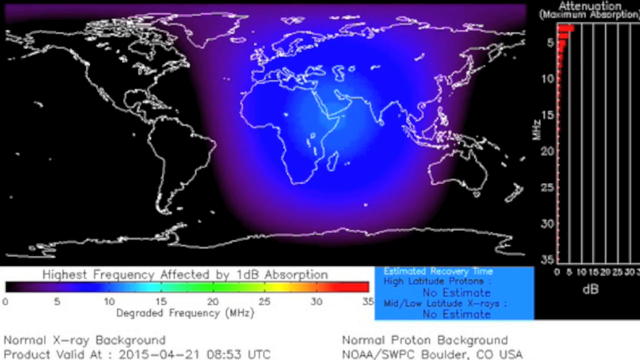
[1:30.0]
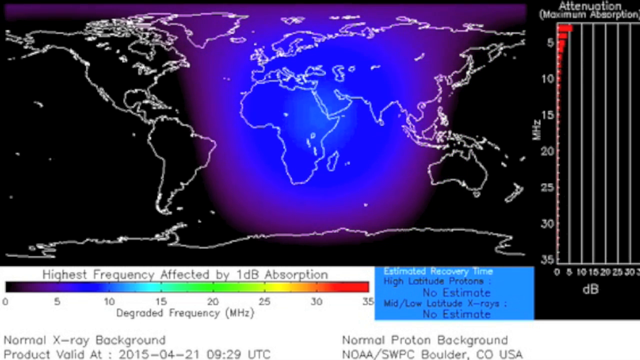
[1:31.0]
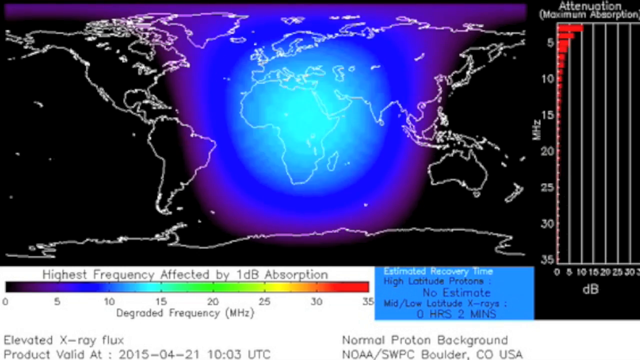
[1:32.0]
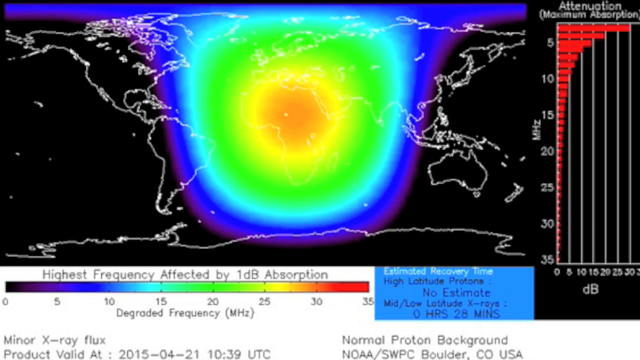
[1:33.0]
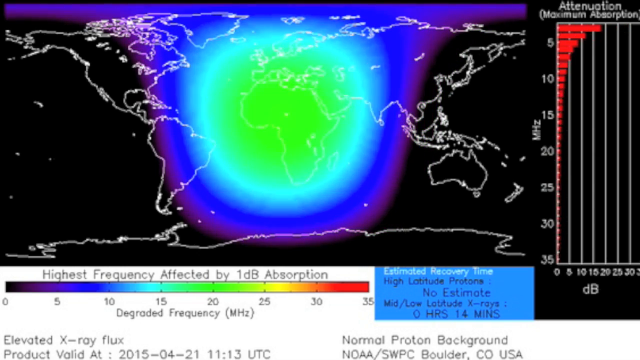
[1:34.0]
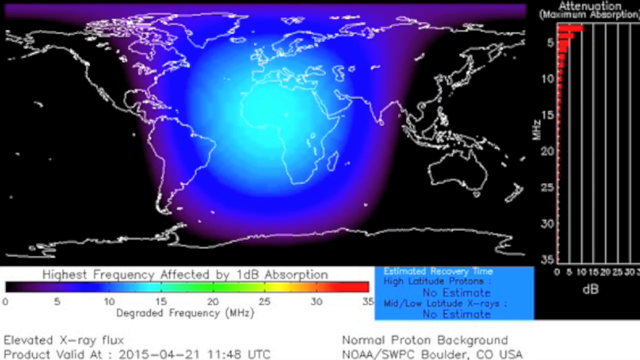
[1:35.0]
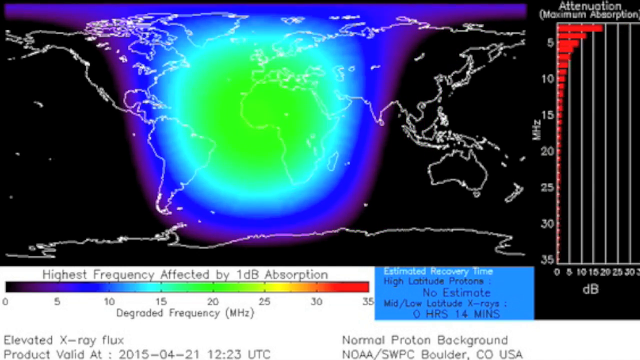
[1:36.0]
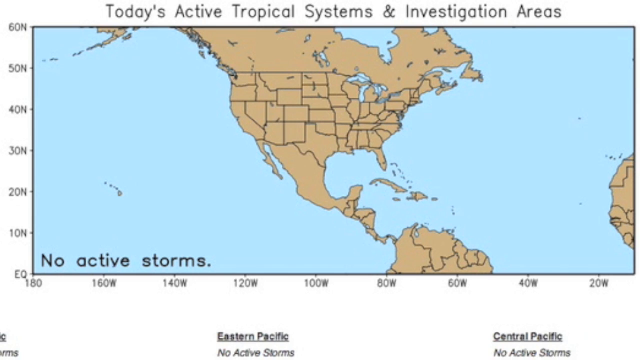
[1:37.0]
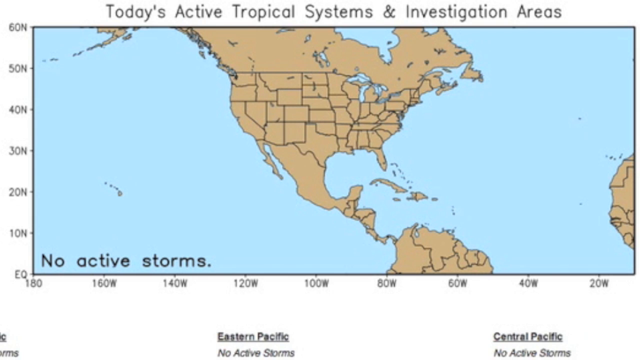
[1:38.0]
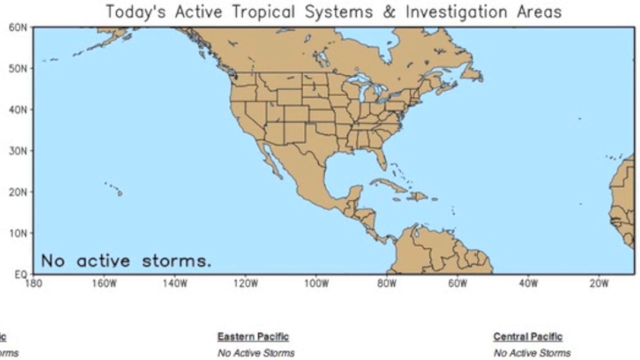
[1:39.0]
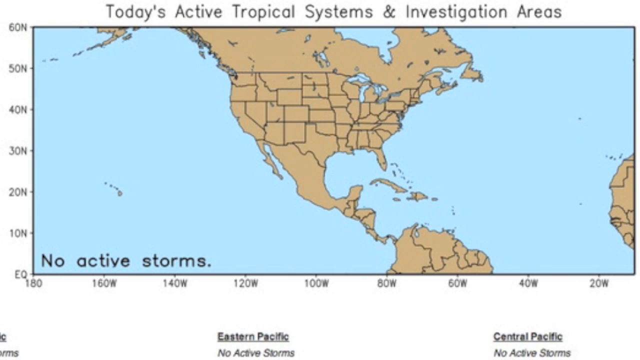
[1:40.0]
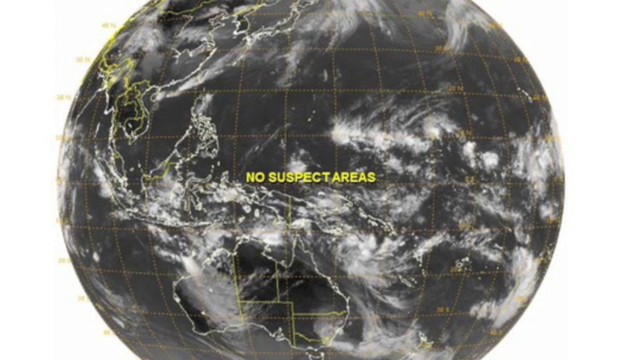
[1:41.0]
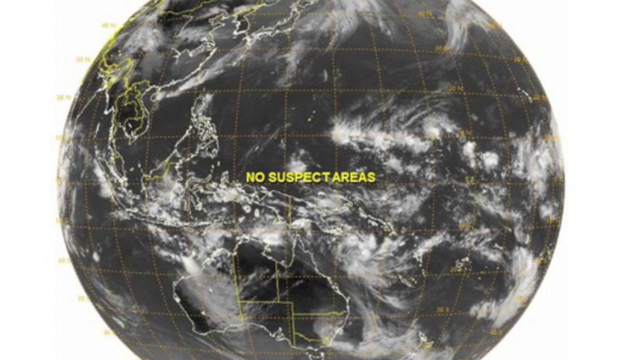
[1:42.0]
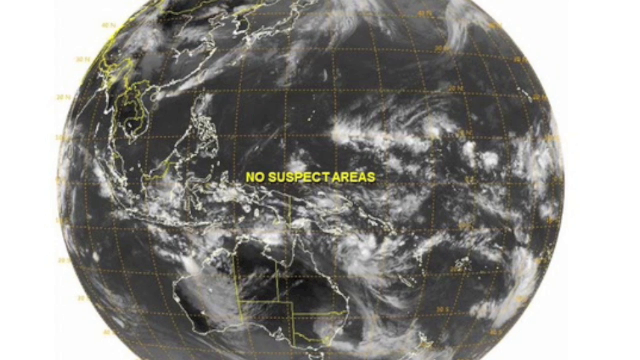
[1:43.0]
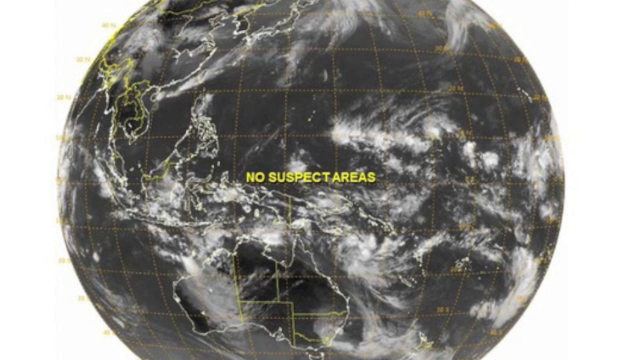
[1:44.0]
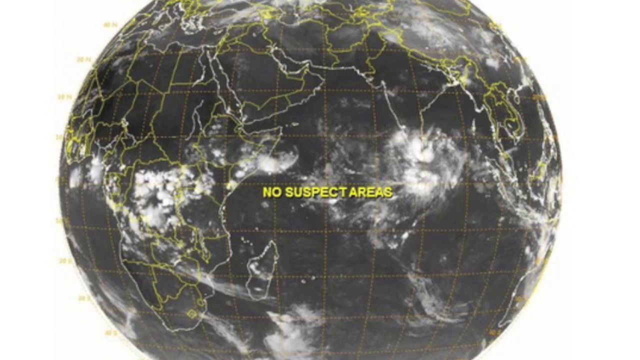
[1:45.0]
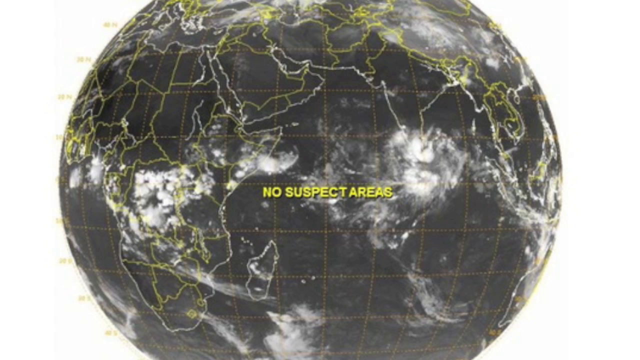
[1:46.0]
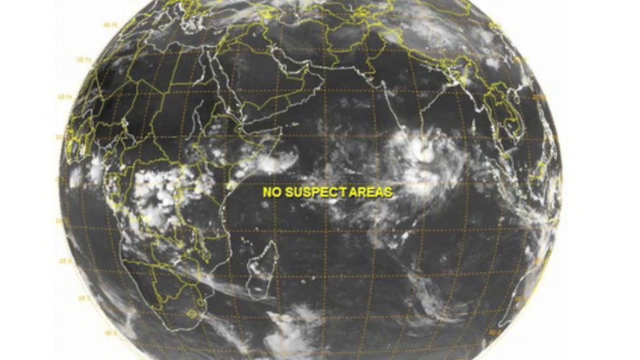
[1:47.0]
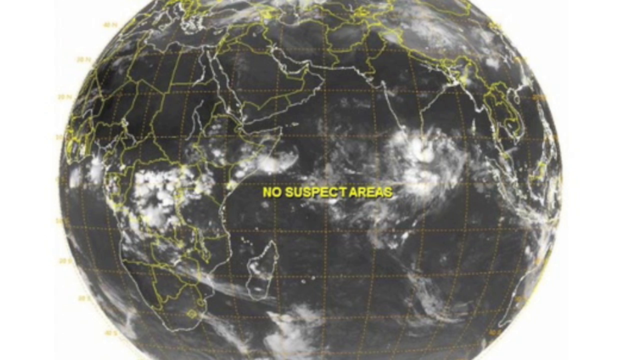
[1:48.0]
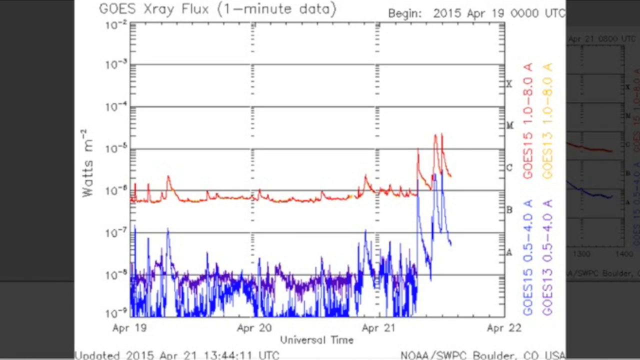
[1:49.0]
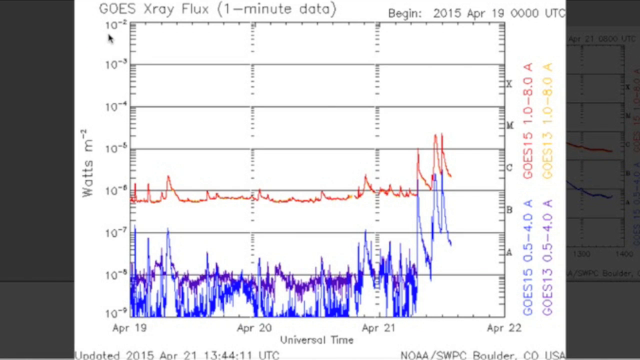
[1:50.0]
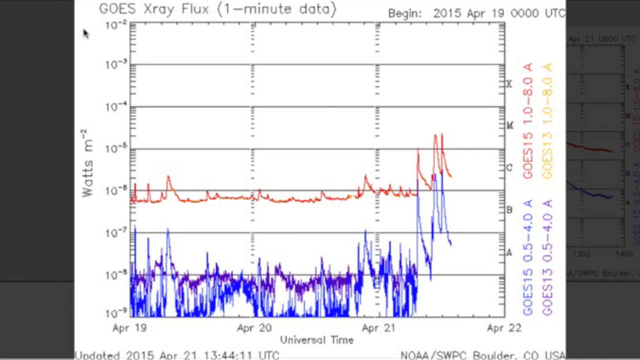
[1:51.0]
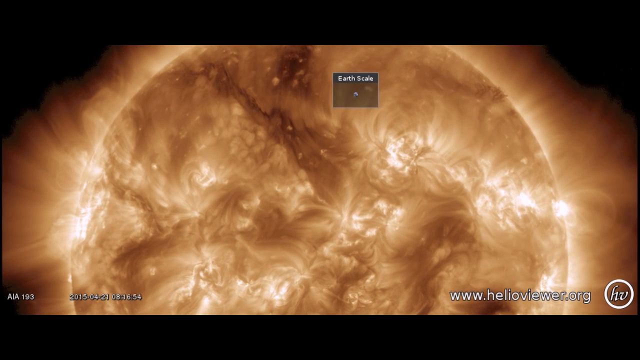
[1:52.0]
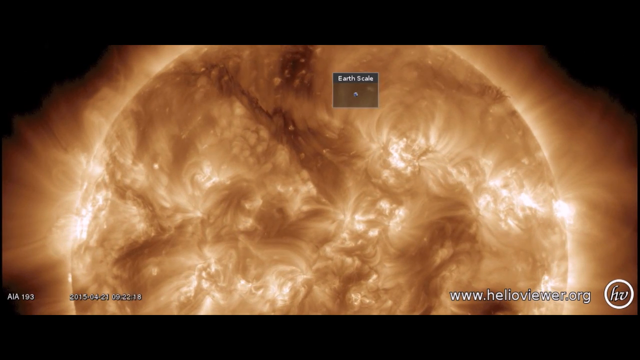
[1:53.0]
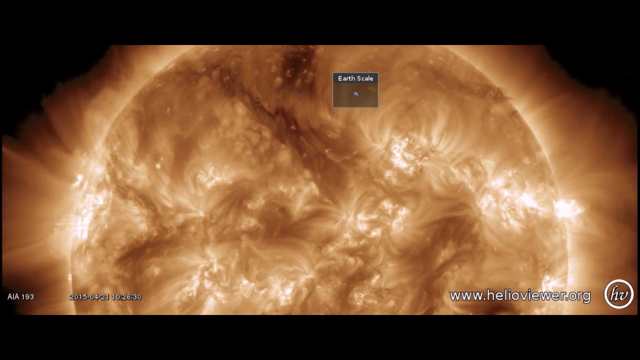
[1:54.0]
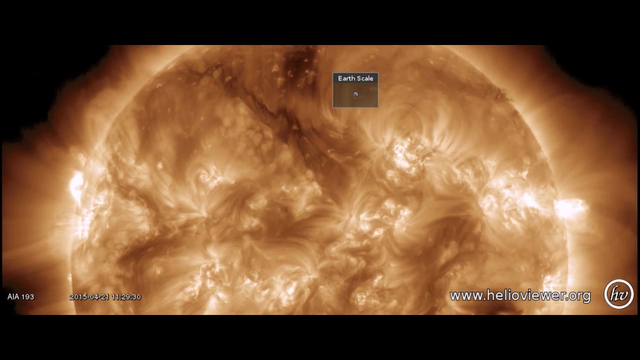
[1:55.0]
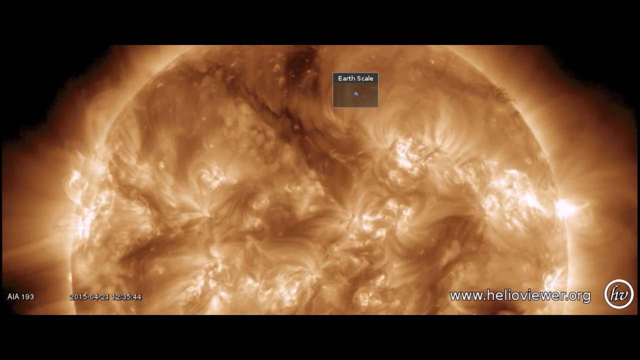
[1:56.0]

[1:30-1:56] A black and white map has a black background and white outlines of the continents: the United States at the top left, South America, and on the right side Russia, Africa and Australia. A blue highlight covers what looks like the area from Iceland to Japan and down to Africa and South Africa. At the bottom is "highest frequency affected by one dB absorption" with a bar that is black on the left side and red on the right side, and at the bottom left black text reads "normal x-ray background". Suddenly green colors radiate over Africa, then blue, then green and yellow. Another map follows with a white background and blue waters, showing the United States of America in brown. At the top it reads "today's active tropical systems and investigation areas", and at the bottom left it reads "no active storms". Next is what looks like a black and white picture of the earth as a globe on a white background, with white clouds and a grid of dotted yellow lines; yellow text in the middle reads "no suspected areas". The view transitions to another part of the globe, reading "no suspect areas". Then comes another graph with a red squiggly line at the top and a blue squiggly line at the bottom, labeled "watts M minus 2" and "x-ray flux". Finally, a screen shows what looks like the surface of the sun, a red, white and black circle, with "www.helioviewer.org" at the bottom right.